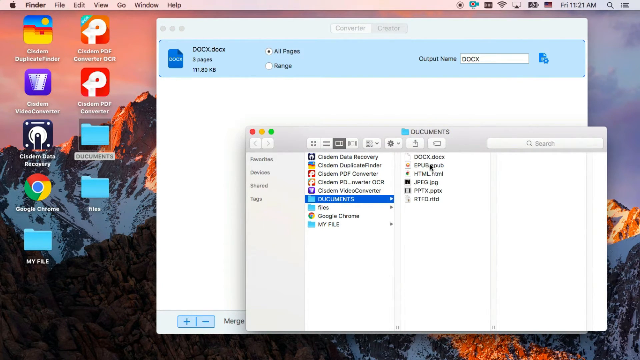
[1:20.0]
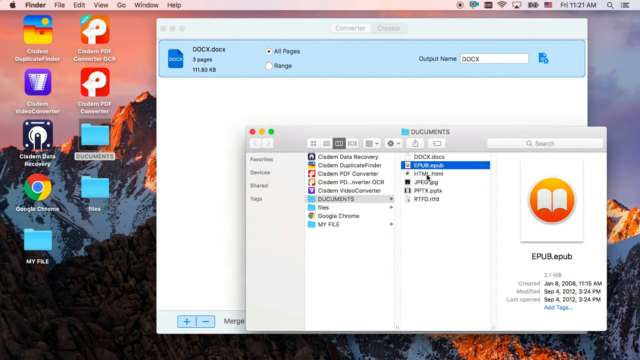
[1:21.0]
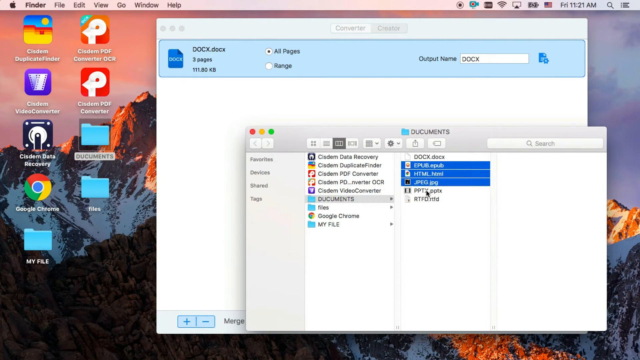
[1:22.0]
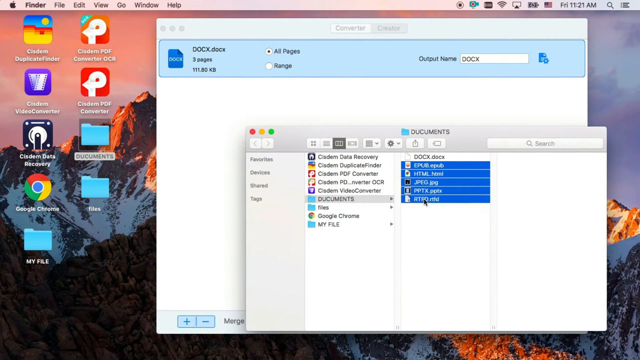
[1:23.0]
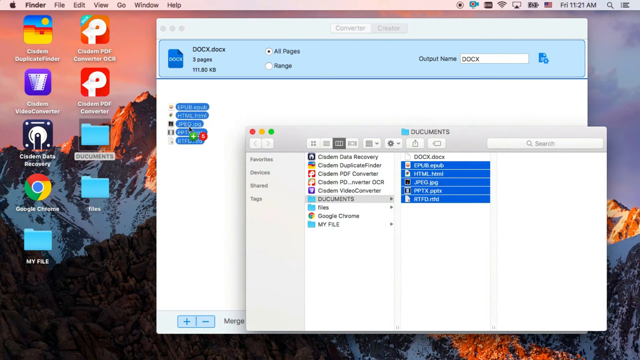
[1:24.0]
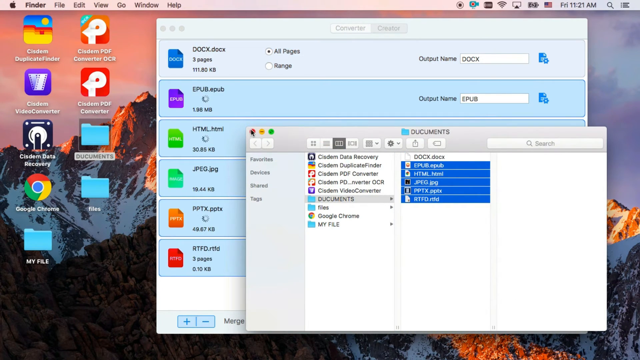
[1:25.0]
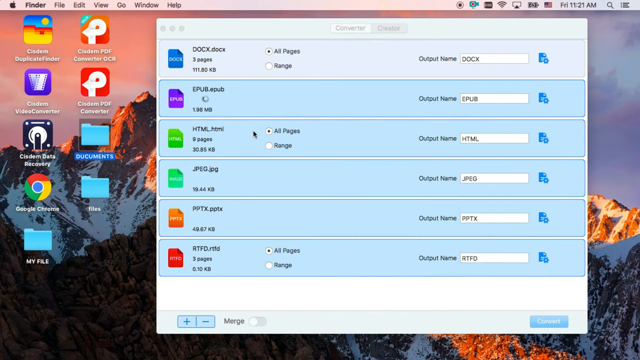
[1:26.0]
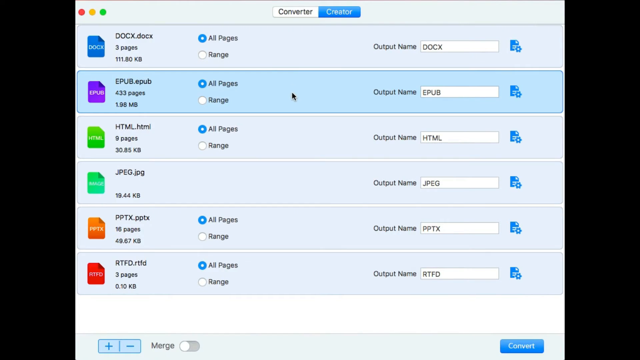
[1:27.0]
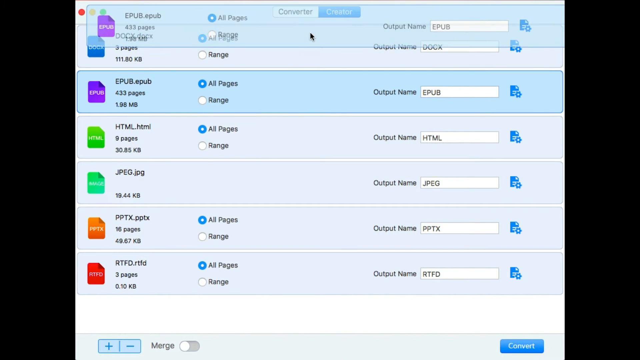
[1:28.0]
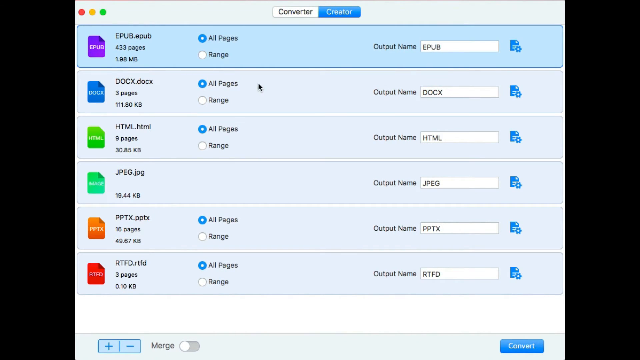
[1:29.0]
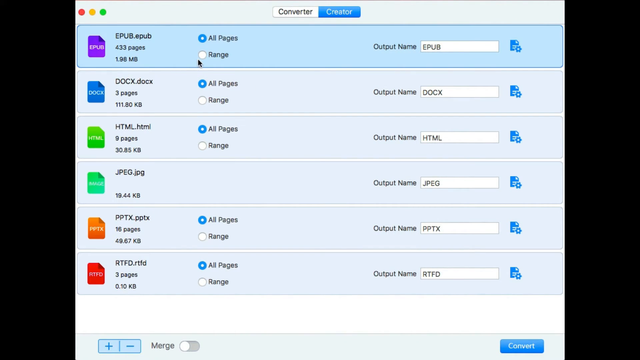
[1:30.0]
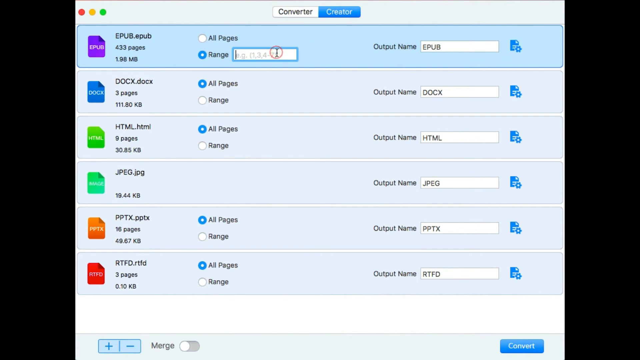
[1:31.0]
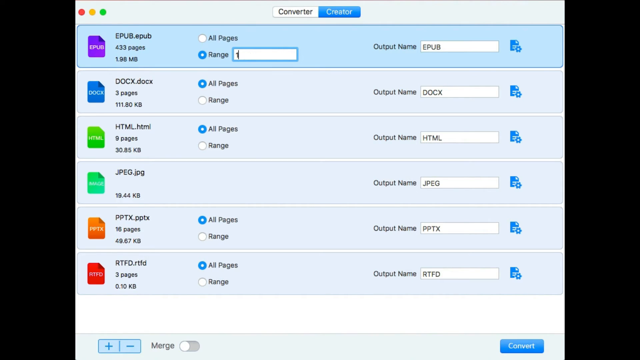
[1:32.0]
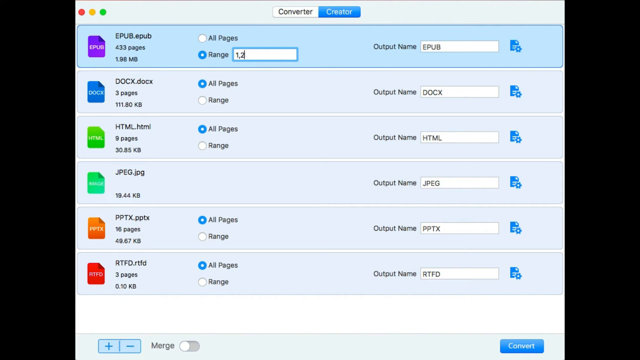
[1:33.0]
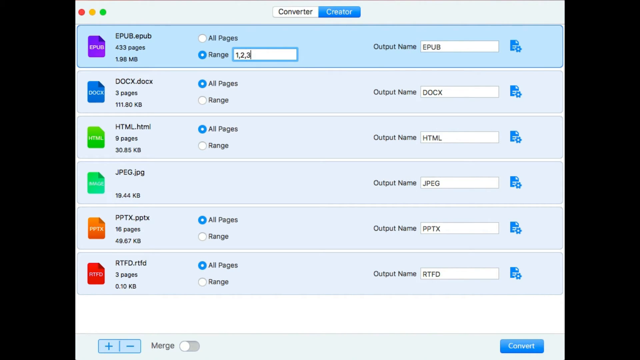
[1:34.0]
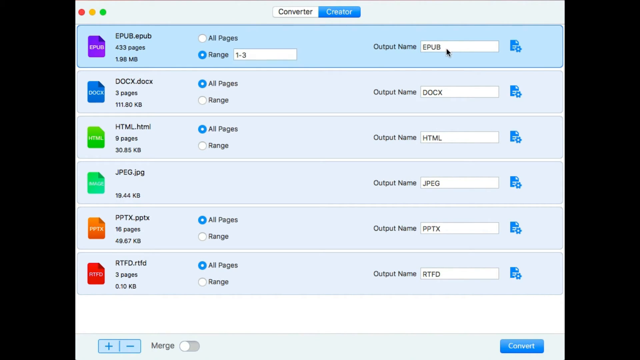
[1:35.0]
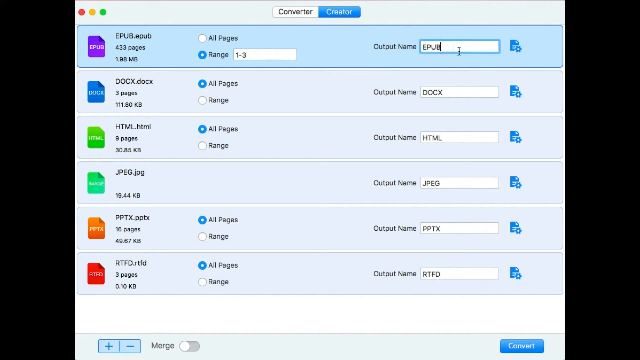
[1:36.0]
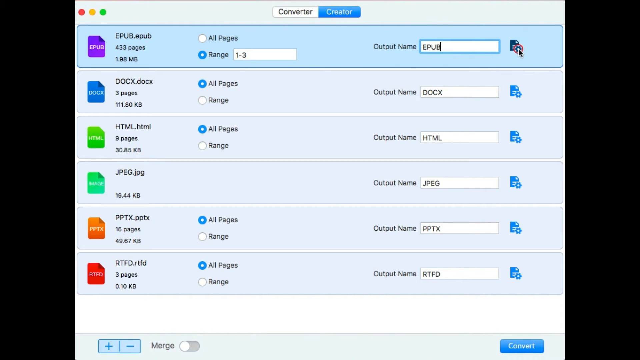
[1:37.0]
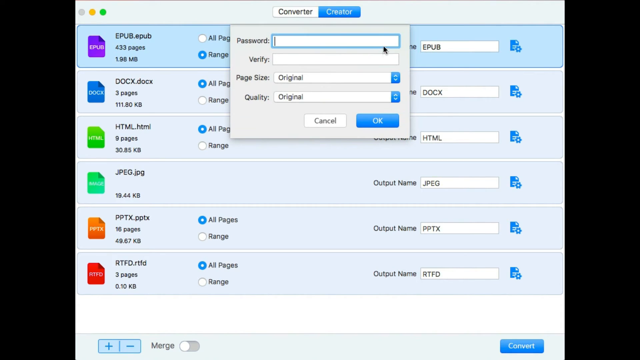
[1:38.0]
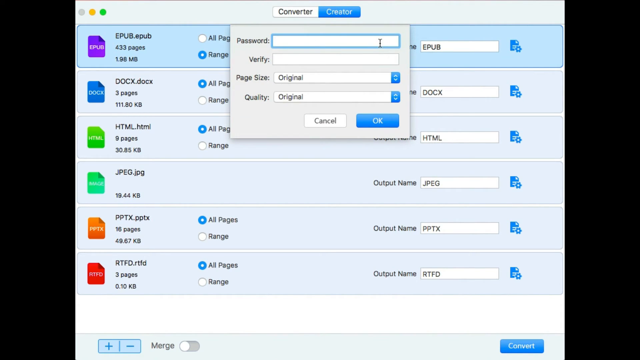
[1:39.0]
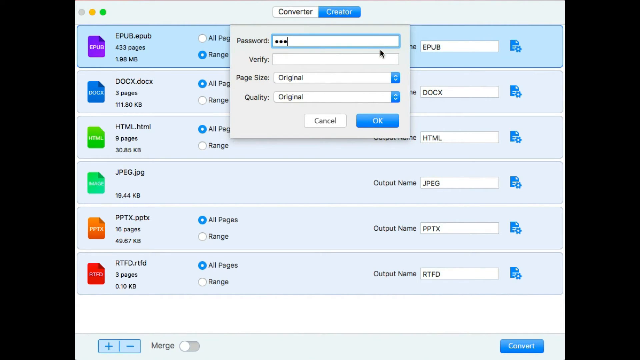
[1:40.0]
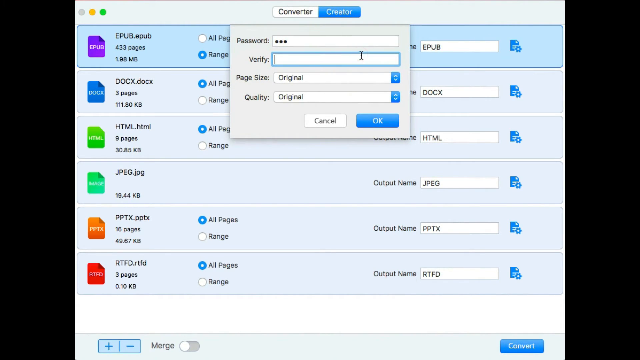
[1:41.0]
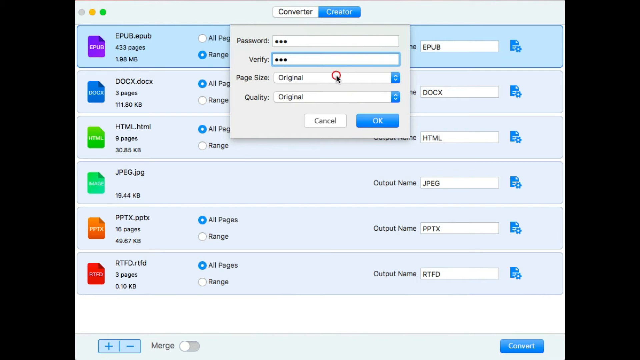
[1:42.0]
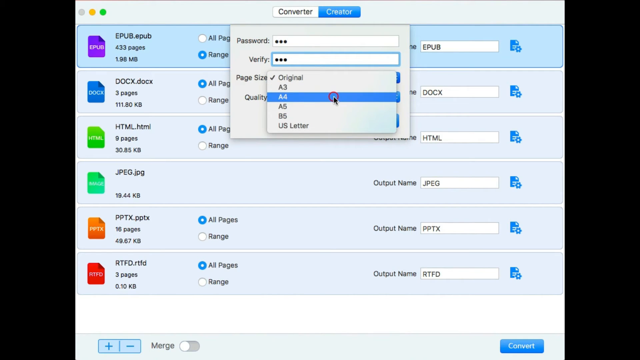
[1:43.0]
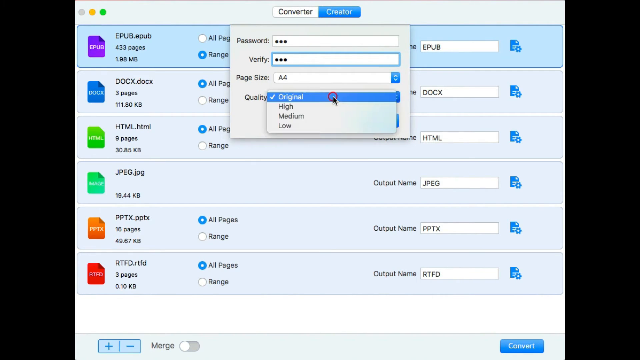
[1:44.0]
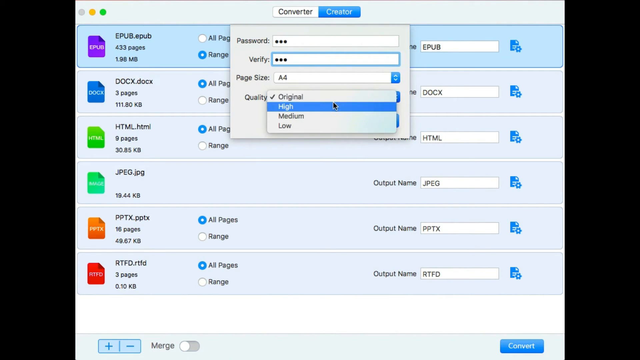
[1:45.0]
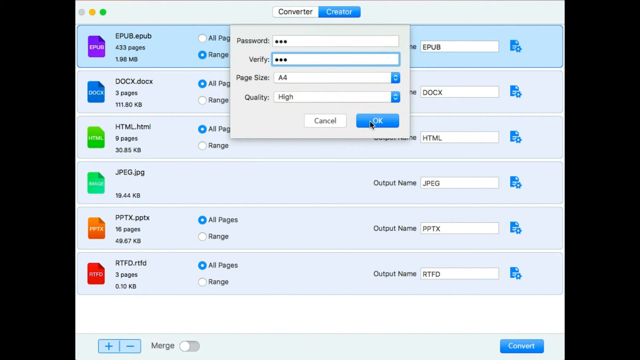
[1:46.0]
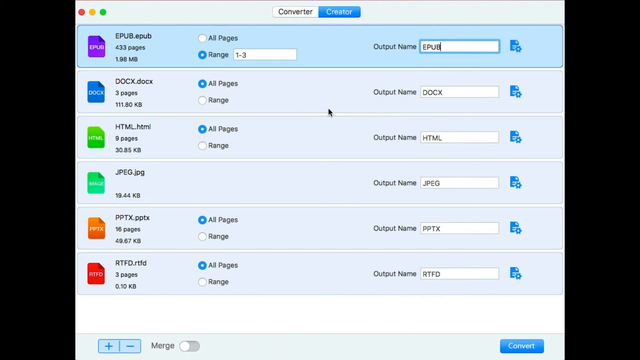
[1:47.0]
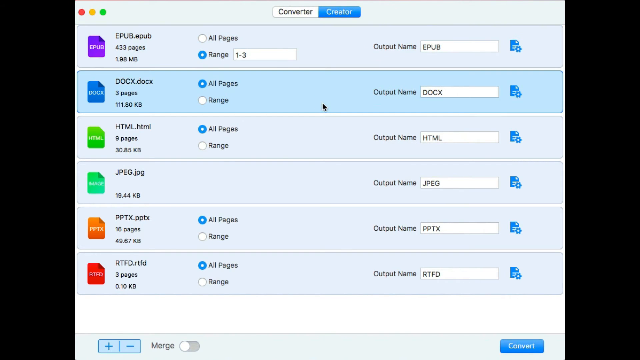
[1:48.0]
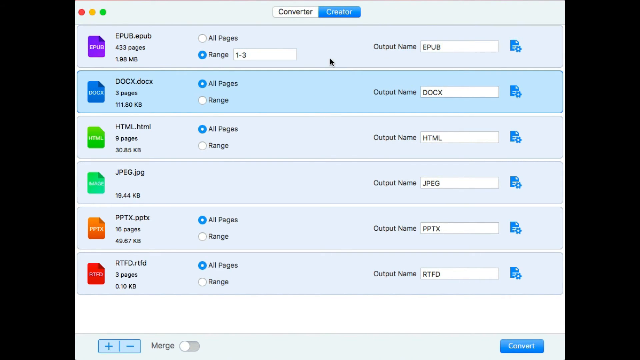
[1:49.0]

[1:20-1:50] The first set apparently finished converting, and a new group of files appears to be converted: docx, epub, html, jpeg, PowerPoint and rstd files. The man grabs all these files from his documents folder and drags them into the converter window. He then changes their order, moving the EPUB file from the second row to the first row. He clicks the range radio button and enters a range of 1, 2, 3, which immediately changes to "1-3." On the far right of the first row there is a little document icon, which he clicks, opening a small pop-up at the top with "password," "verify," "page size" and "quality." He enters the same password in the password and verify fields, probably to create a password. At the very top there is a converter and creator selection, and the creator part is highlighted.